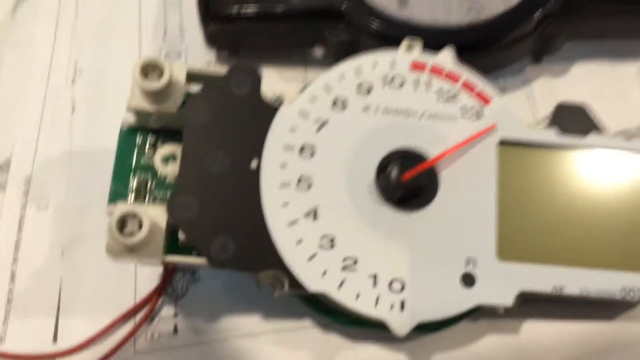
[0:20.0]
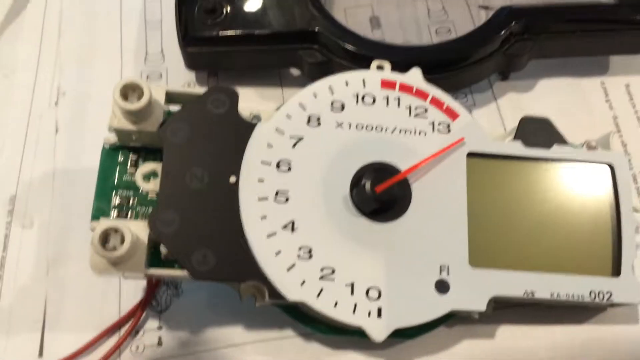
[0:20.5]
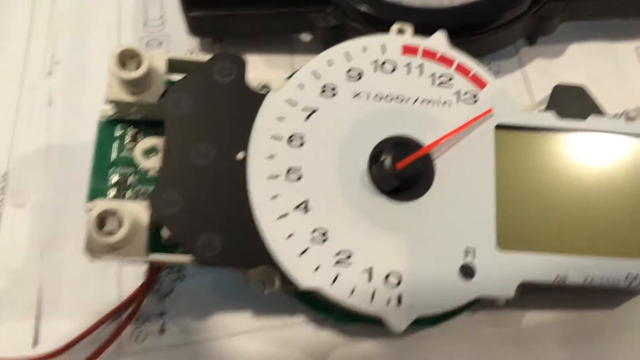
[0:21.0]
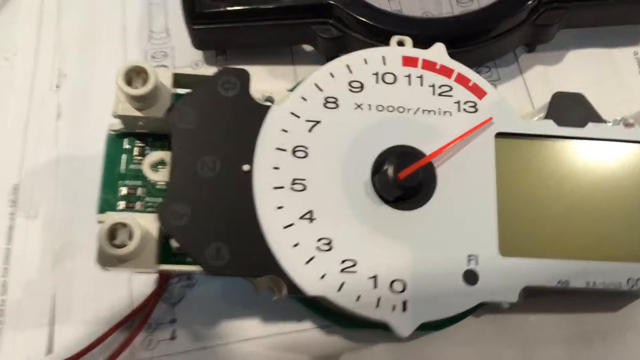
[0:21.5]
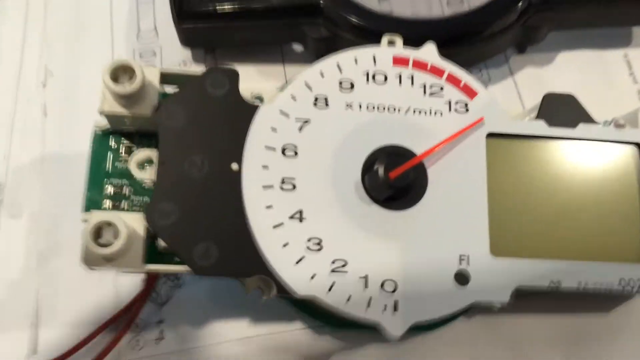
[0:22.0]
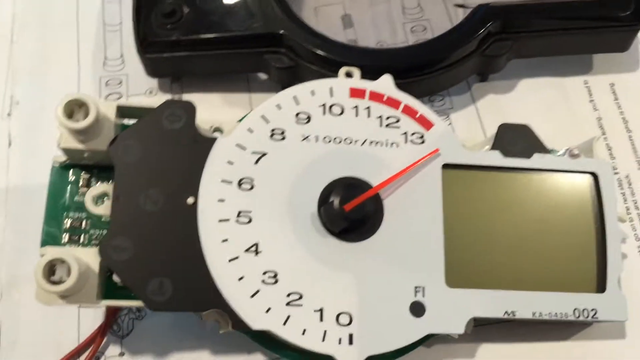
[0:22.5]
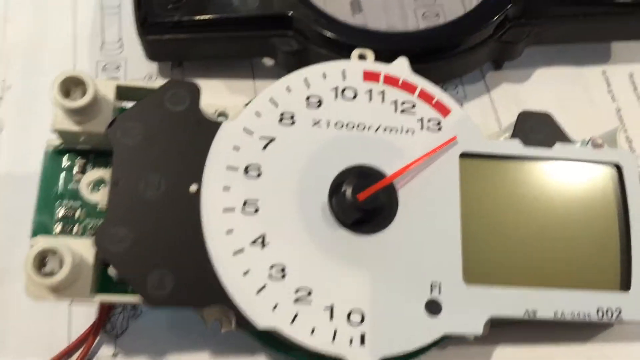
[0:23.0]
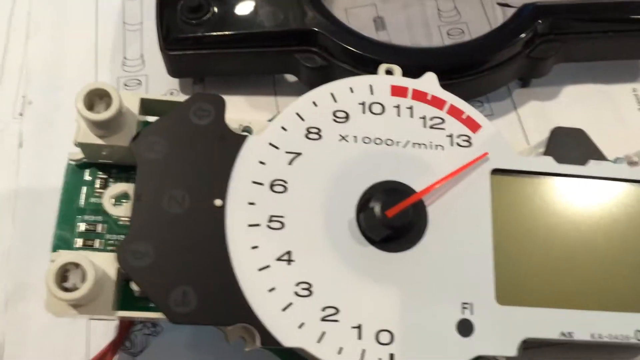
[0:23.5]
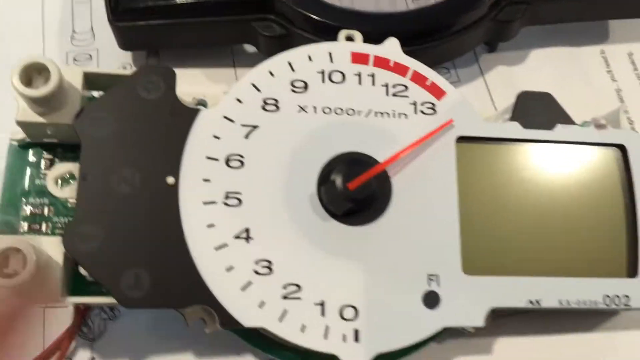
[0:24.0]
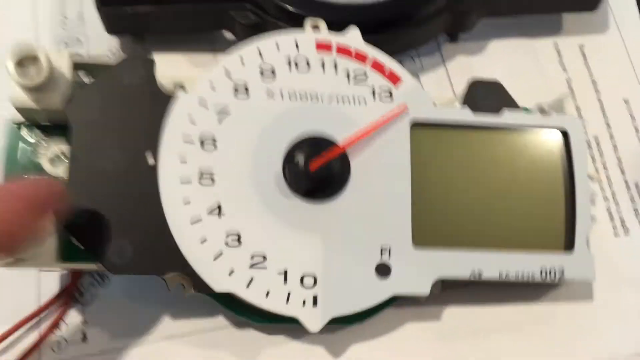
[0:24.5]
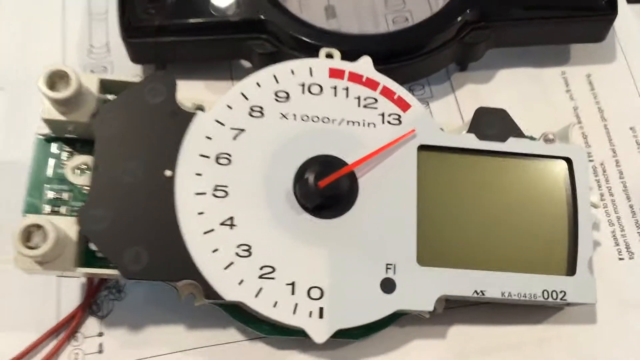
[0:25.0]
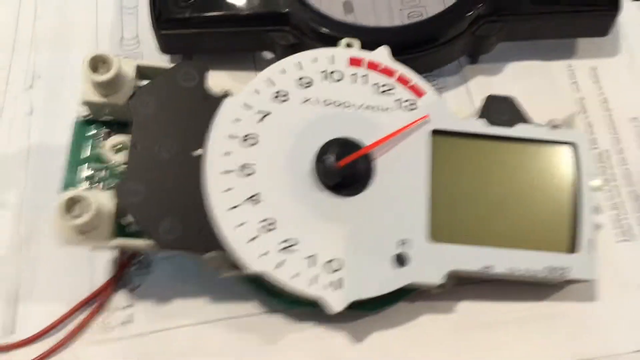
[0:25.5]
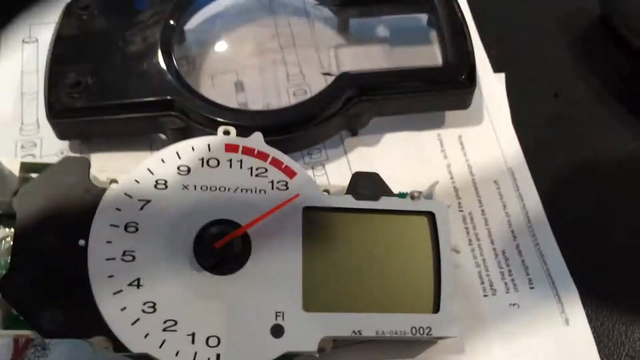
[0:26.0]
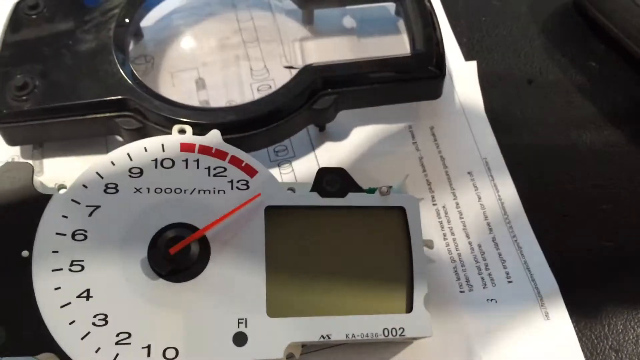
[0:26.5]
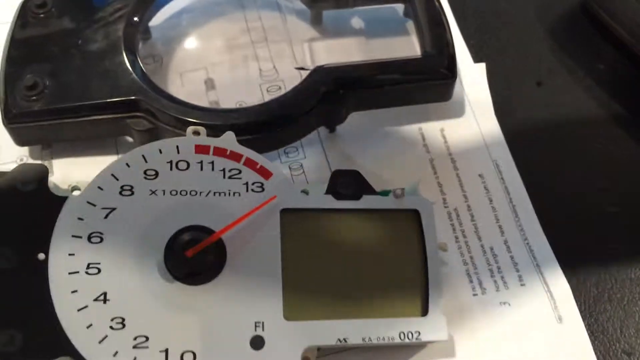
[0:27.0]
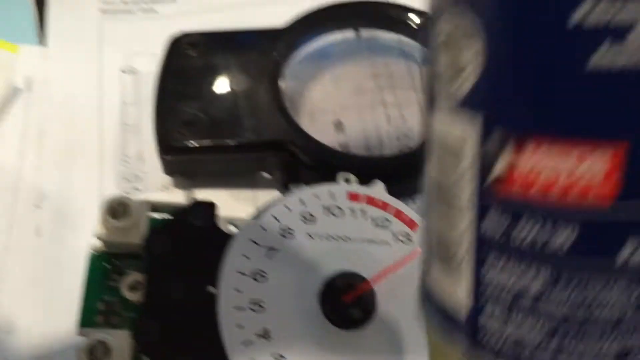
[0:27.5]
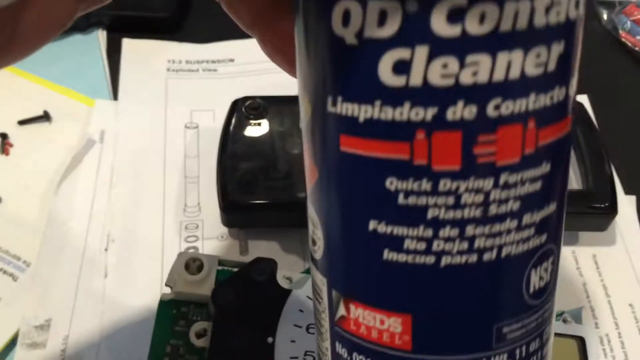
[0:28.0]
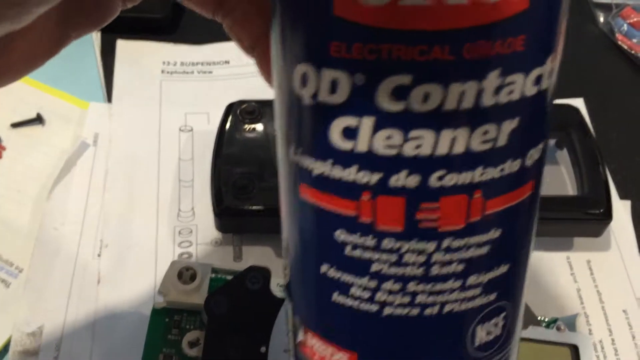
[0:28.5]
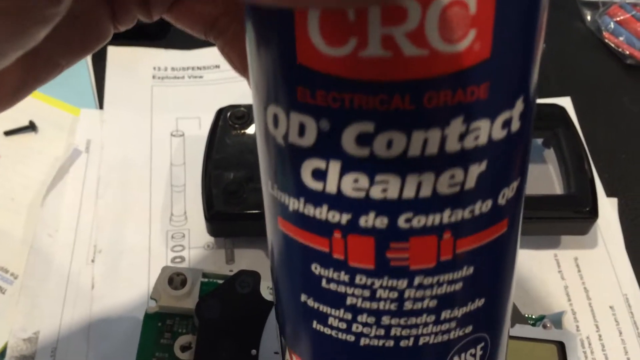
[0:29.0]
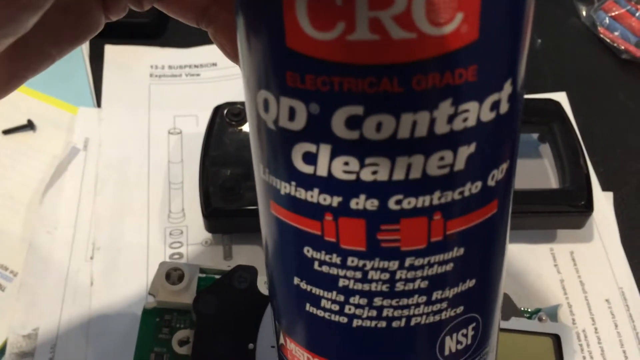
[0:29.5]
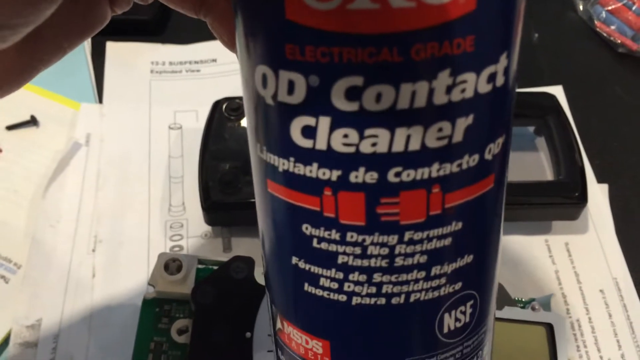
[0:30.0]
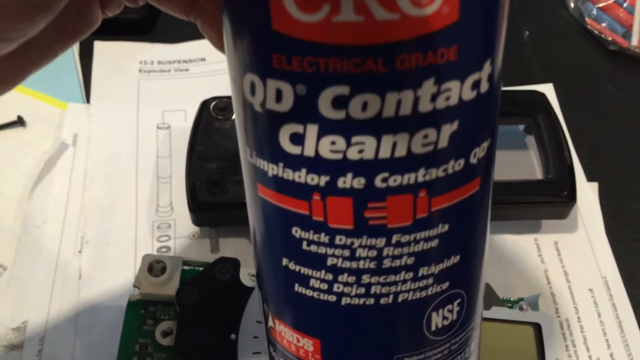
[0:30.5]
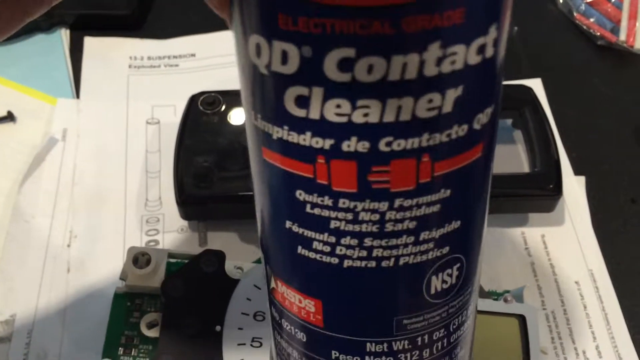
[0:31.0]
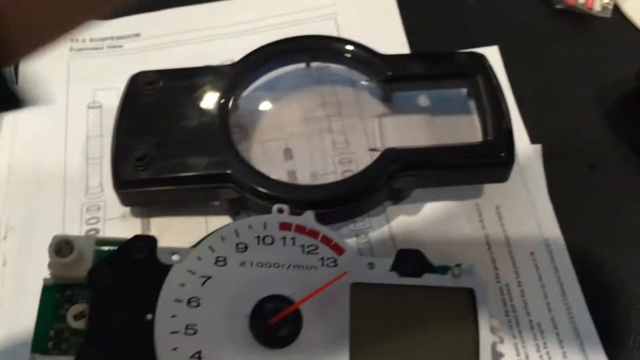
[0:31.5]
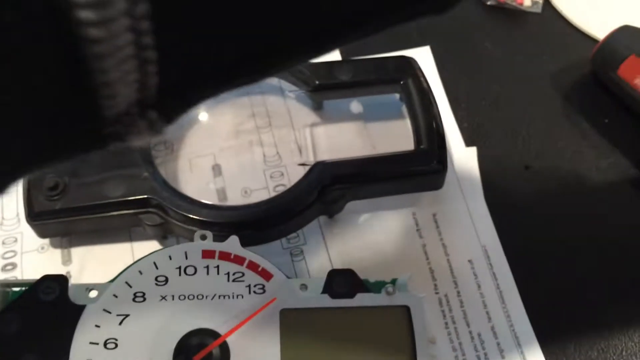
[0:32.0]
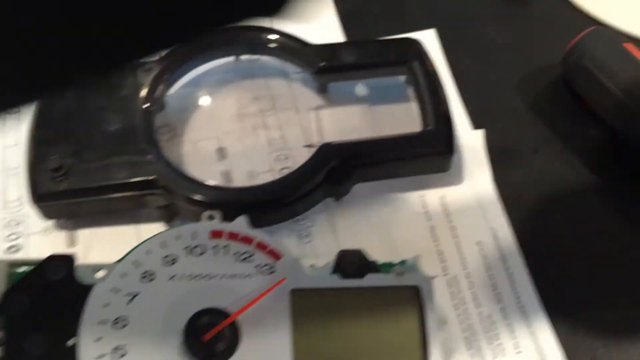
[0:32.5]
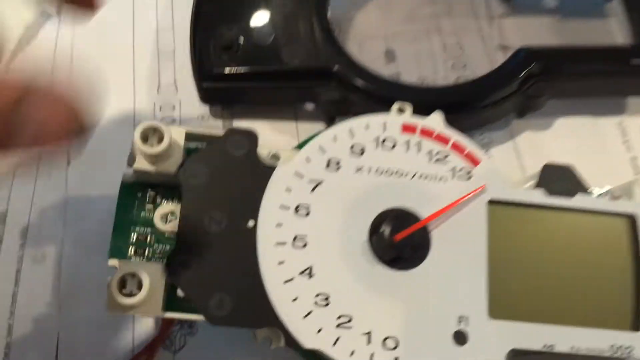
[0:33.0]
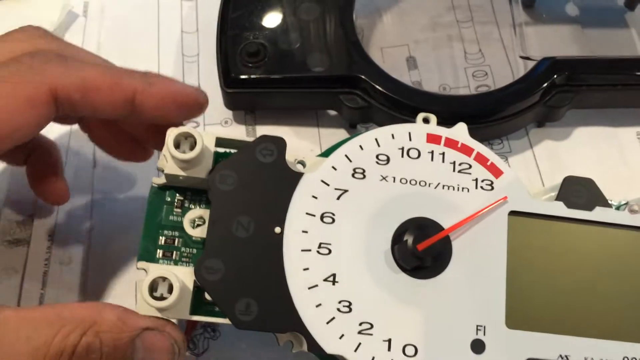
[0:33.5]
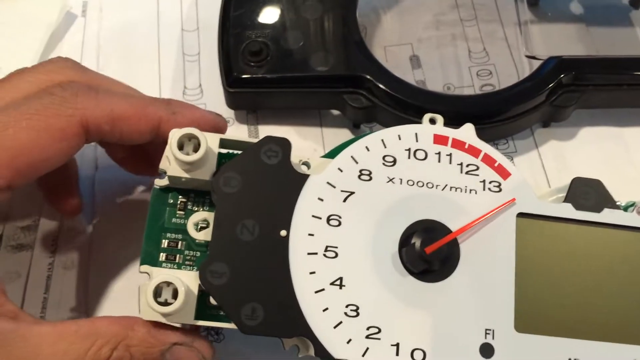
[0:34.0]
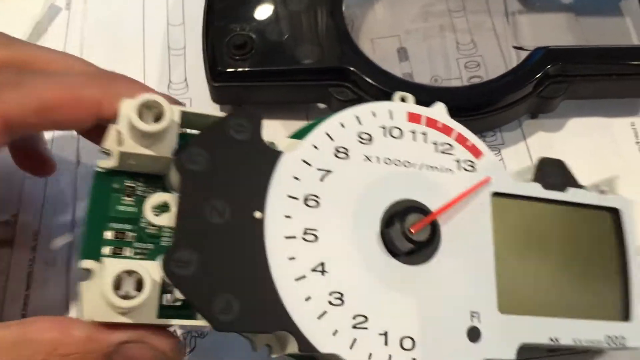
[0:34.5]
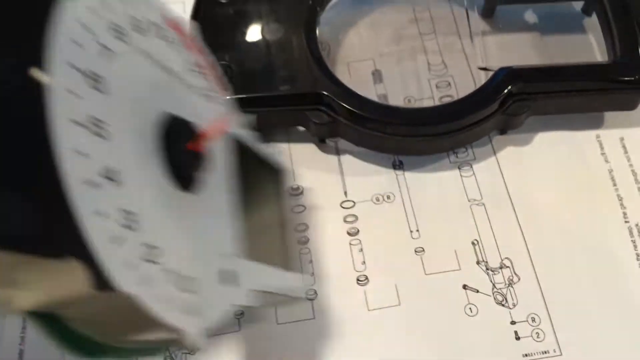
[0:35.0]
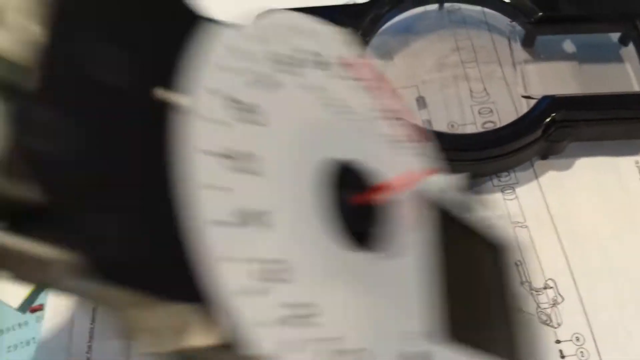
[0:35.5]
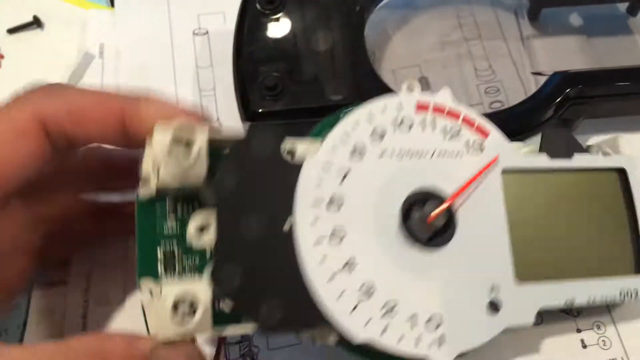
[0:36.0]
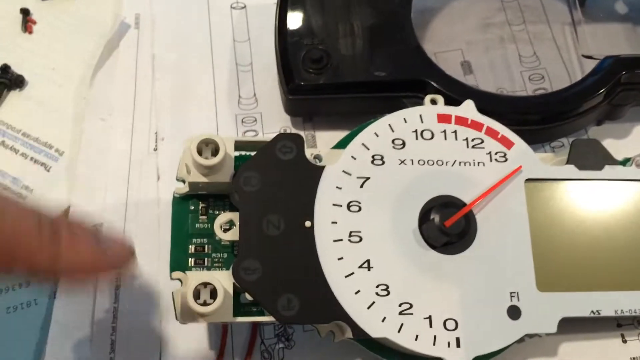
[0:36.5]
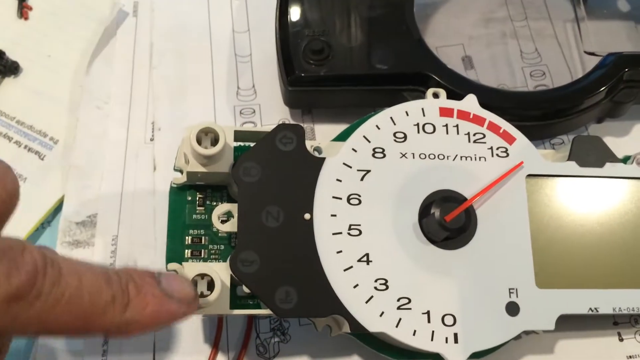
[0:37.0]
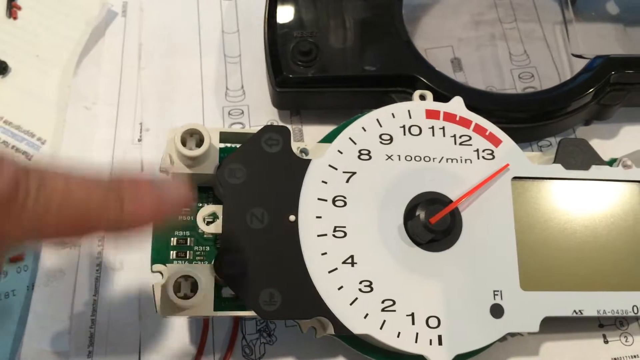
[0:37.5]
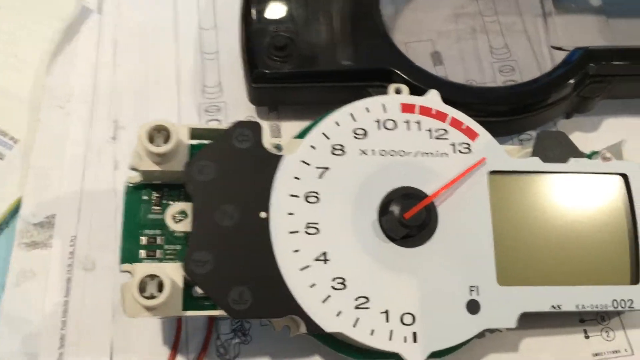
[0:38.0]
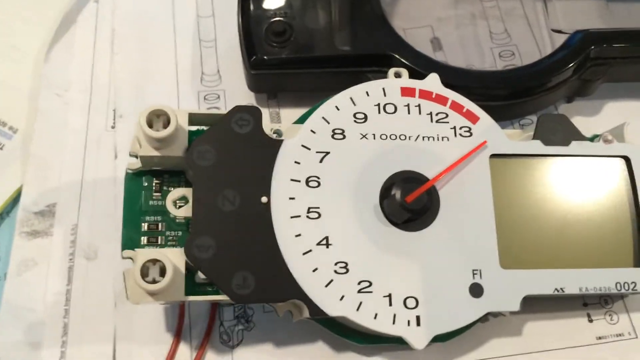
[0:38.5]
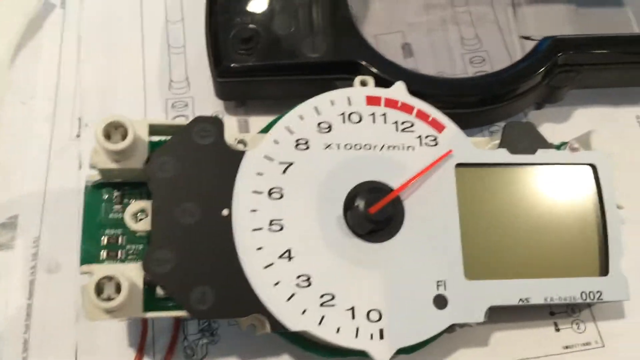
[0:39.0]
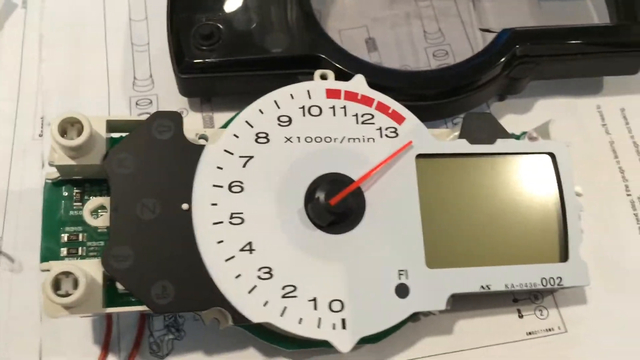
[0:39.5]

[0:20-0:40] The person continues to examine the device, holding the camera above it. He grabs a can of what seems to be some sort of contact cleaner or machinery cleaner, picks it up to show it to the camera, and sets it down again, then reaches, probably to pick it up from the other side. There is still just one individual, and the board and device remain the same. He now picks up the device itself rather than the black casing around it.